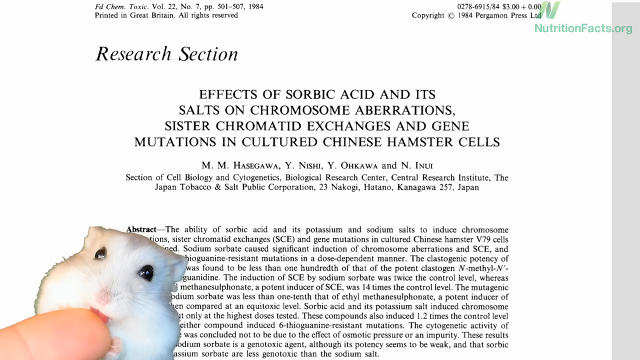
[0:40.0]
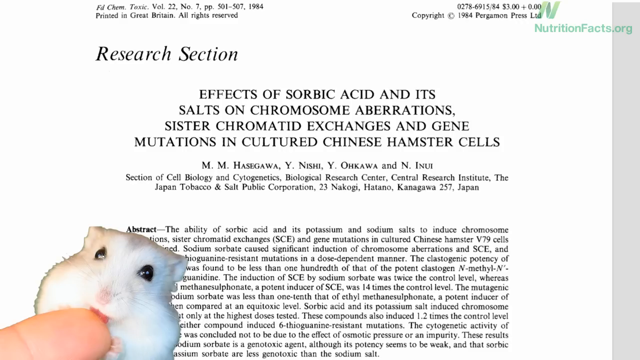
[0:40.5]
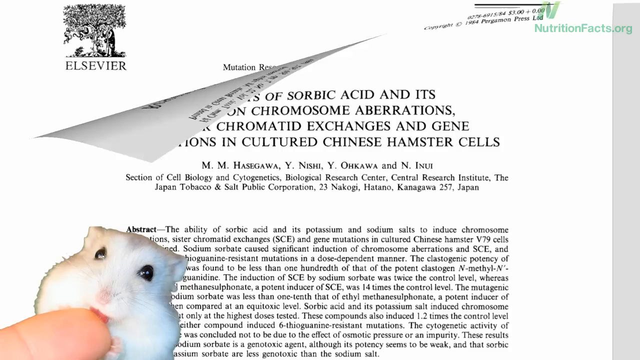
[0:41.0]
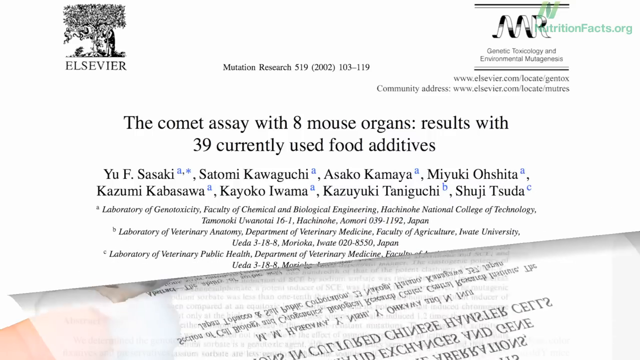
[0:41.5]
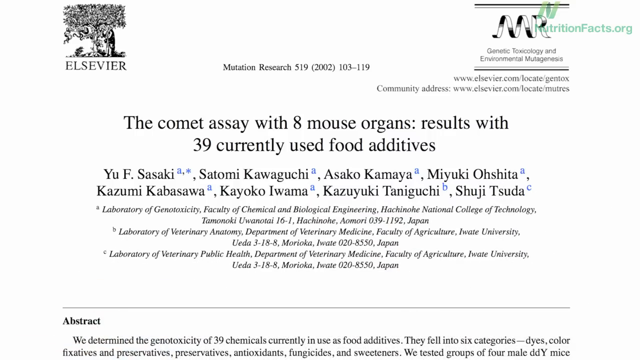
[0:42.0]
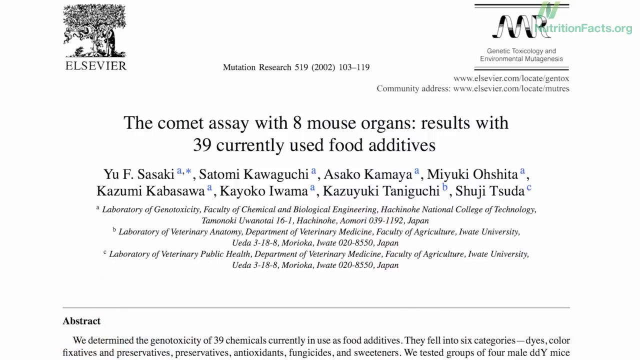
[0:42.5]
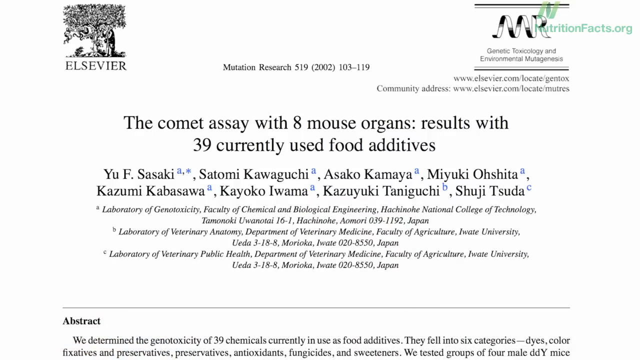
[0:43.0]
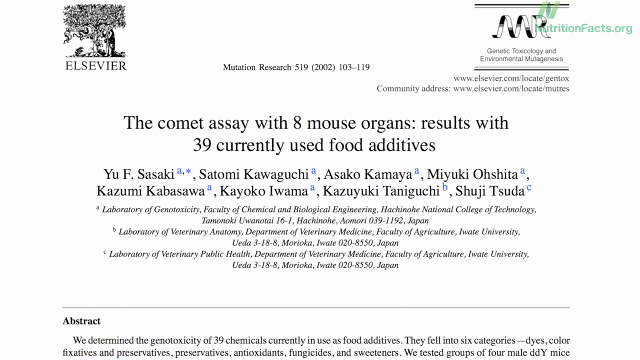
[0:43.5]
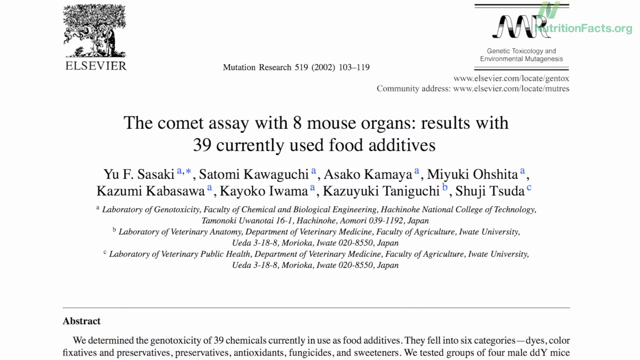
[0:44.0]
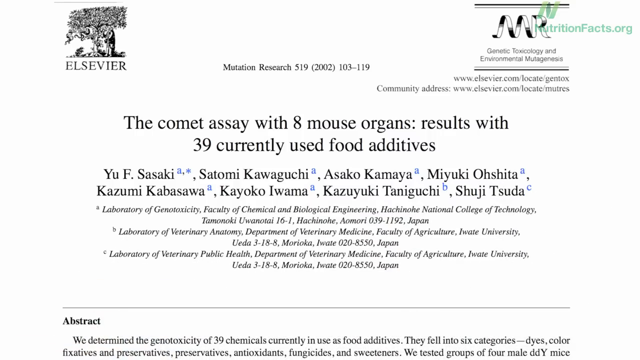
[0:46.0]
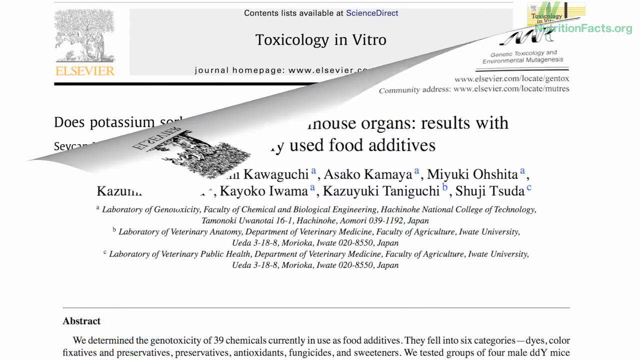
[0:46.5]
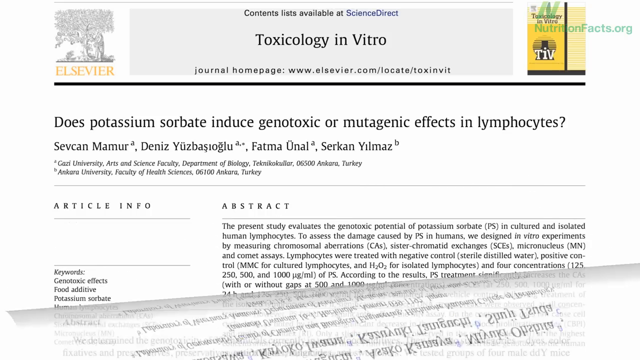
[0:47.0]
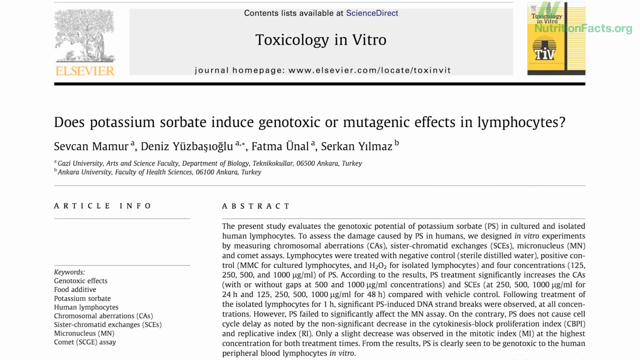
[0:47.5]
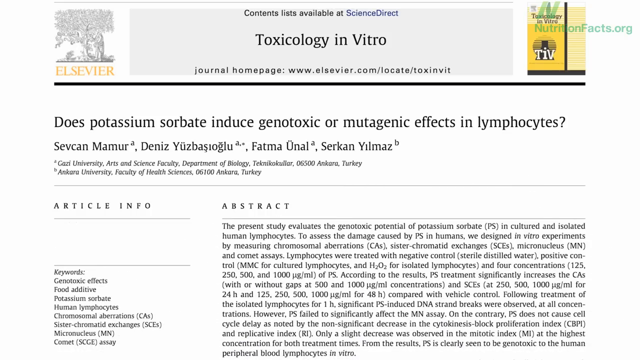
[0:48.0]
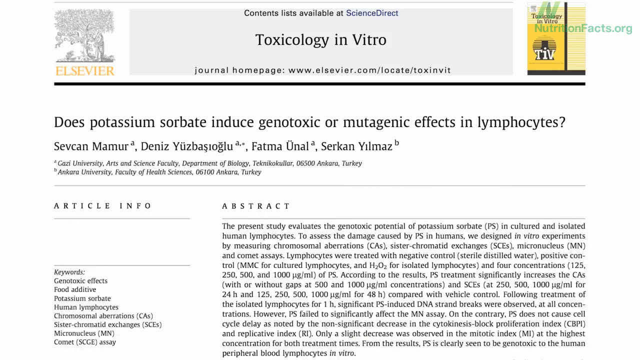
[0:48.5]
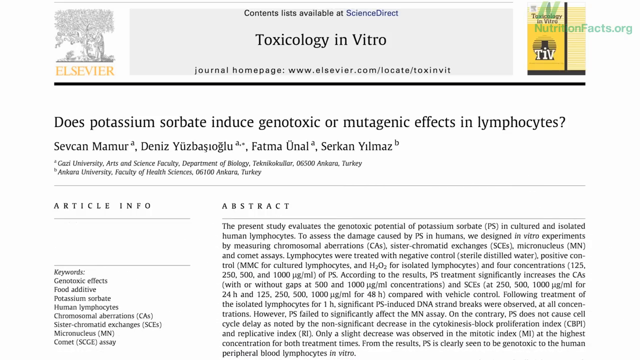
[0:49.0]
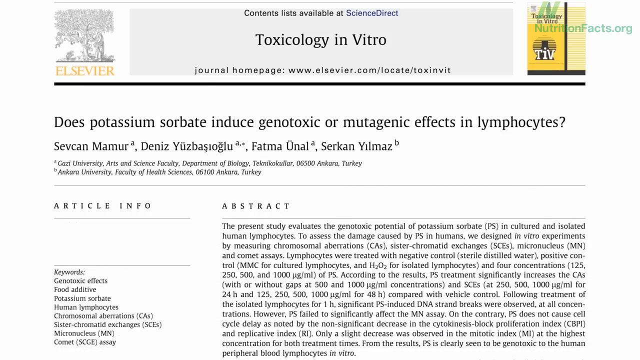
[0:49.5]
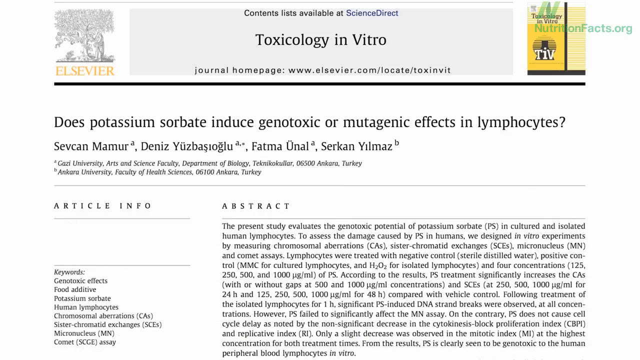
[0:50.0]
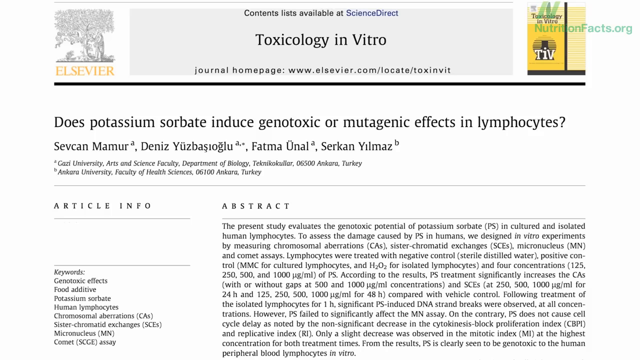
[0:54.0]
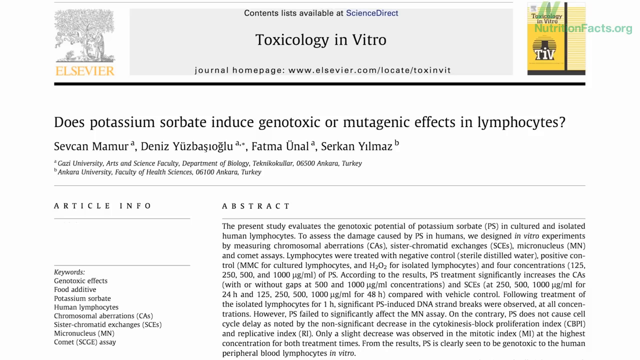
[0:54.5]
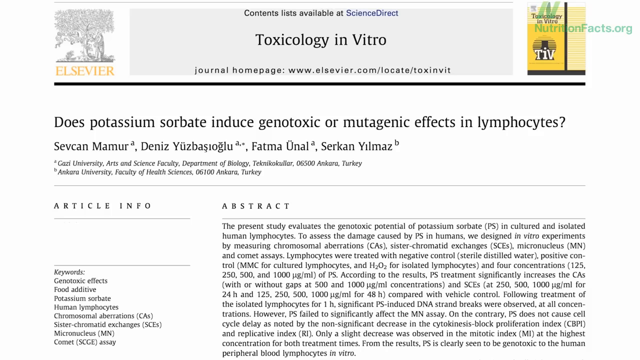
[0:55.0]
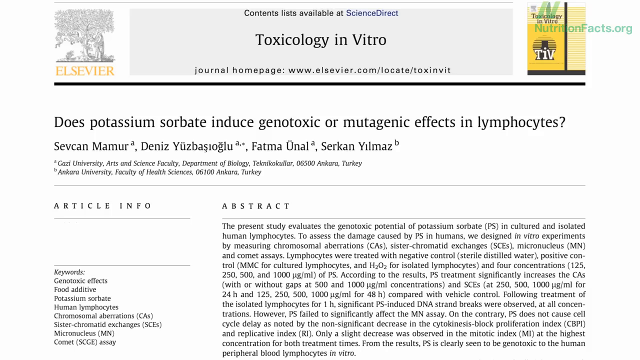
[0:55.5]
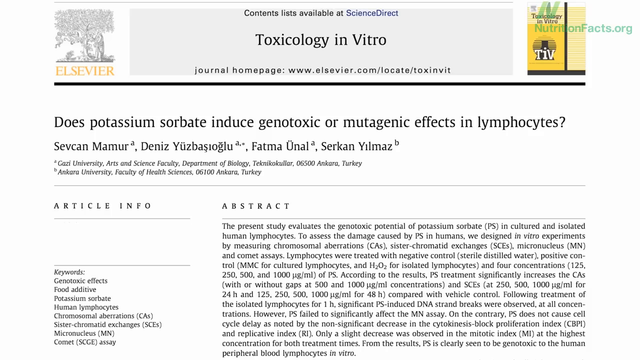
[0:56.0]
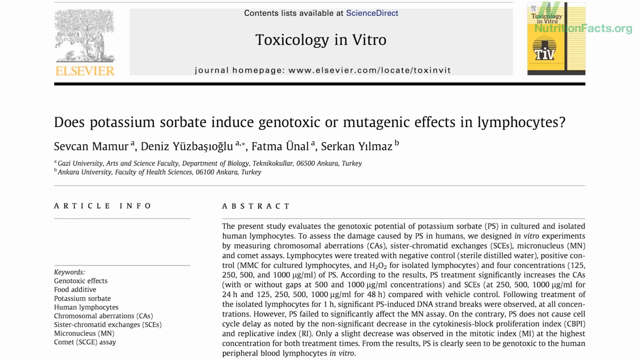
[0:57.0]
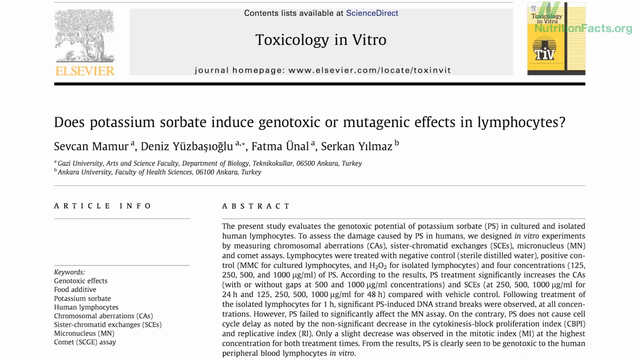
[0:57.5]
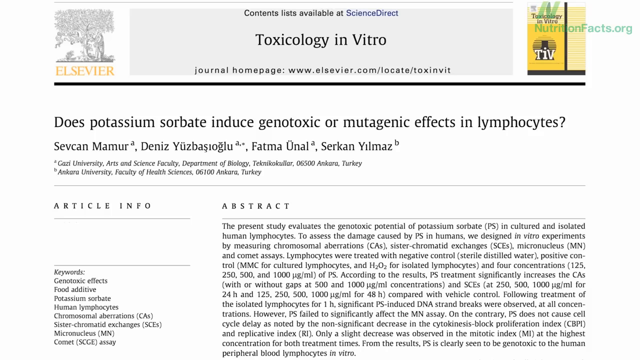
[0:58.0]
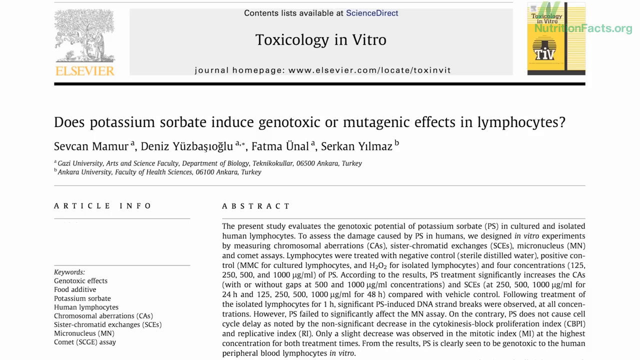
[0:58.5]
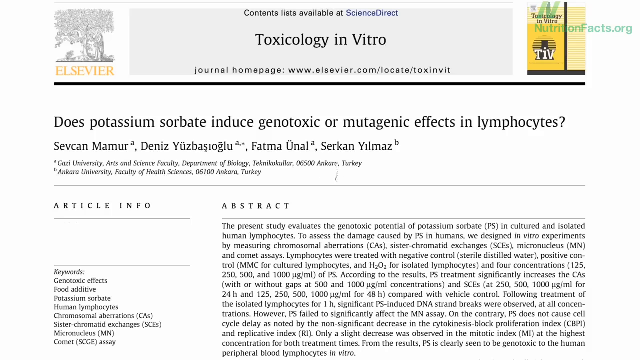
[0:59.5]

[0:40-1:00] The logo for Elsevier, the publishing company, is on the top left, and the MR for genetic toxicology is on the top right. The study peels away the previous page, pulling it from the top left to the bottom right, revealing a study called "the Comet assay with eight mouse organs results with 39 currently used food additives", along with the researchers and the laboratory where the research took place. After a moment, the page is pulled down from the top as if sliding it away, and the screen reads "toxicology in vitro" and "Does potassium sorbate induce genotoxic or mutagenic effects in lymphocytes?", showing the researchers, the university it is from, and the abstract. After a few seconds the screen changes.